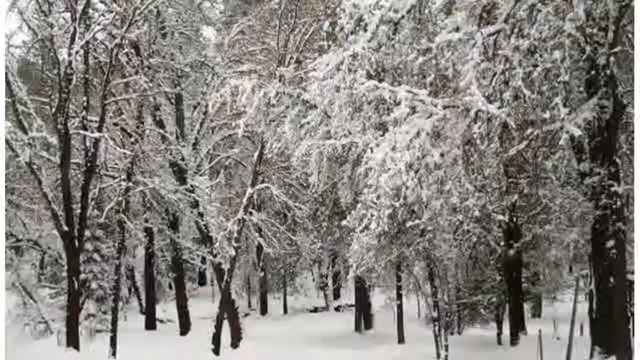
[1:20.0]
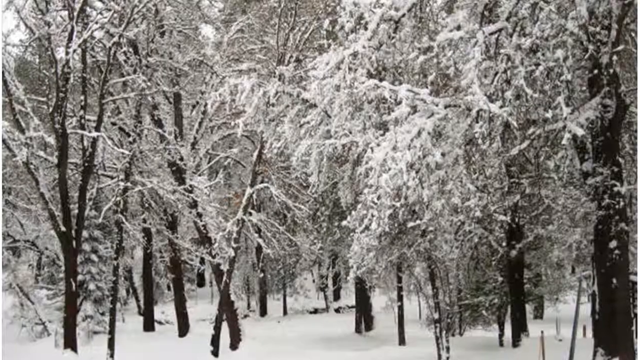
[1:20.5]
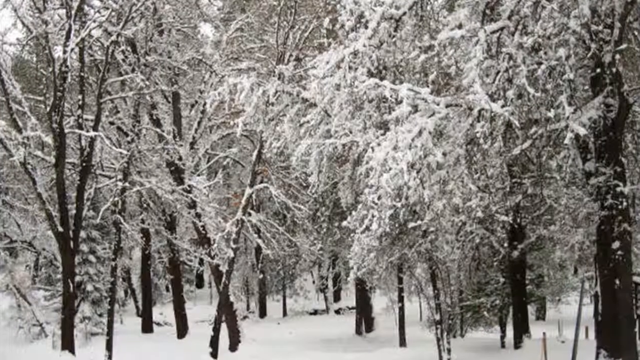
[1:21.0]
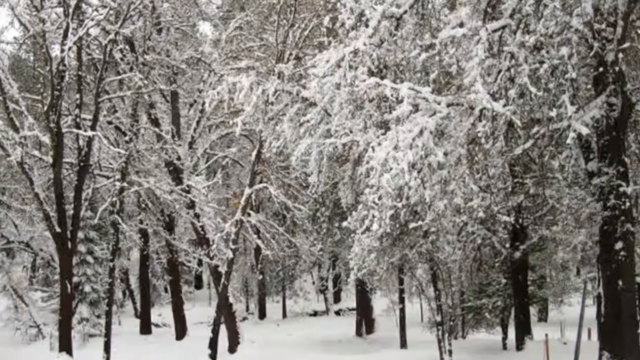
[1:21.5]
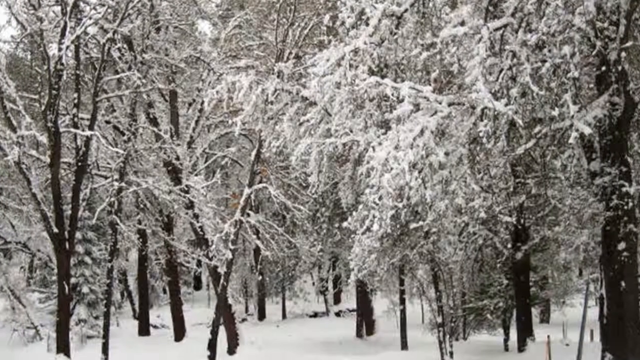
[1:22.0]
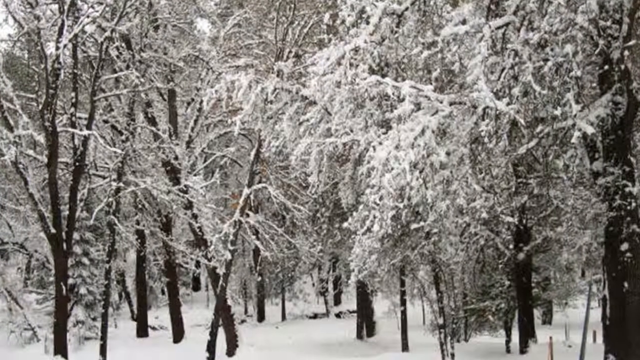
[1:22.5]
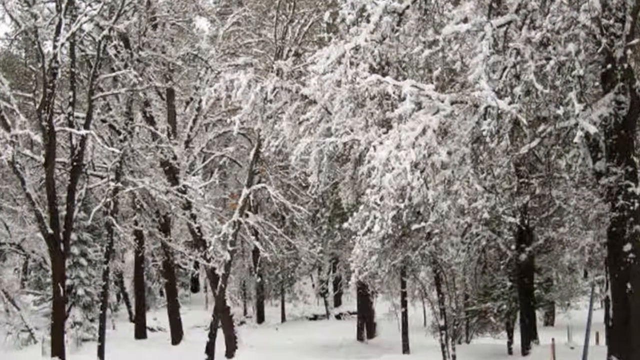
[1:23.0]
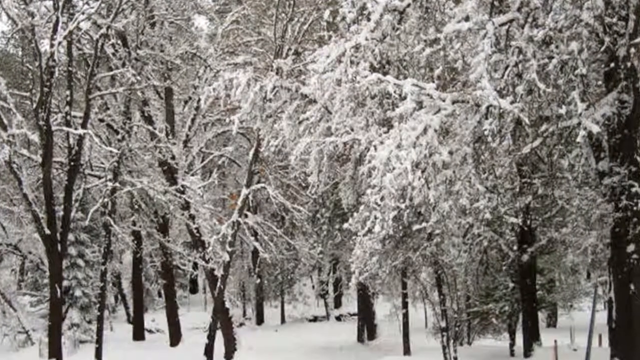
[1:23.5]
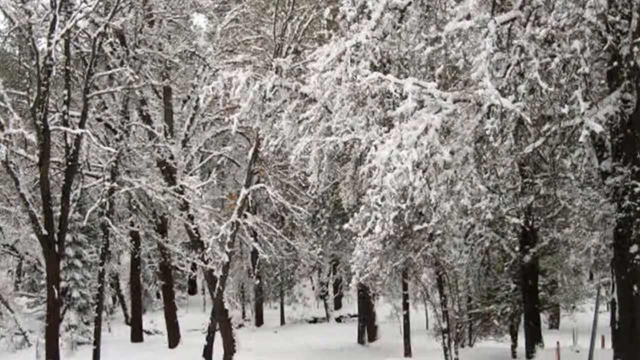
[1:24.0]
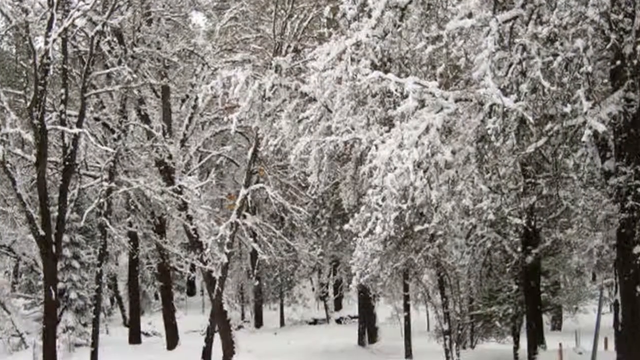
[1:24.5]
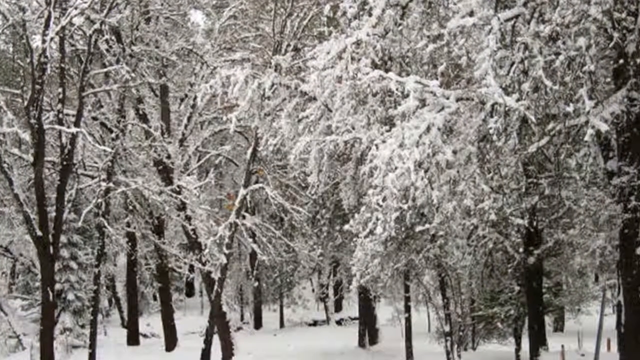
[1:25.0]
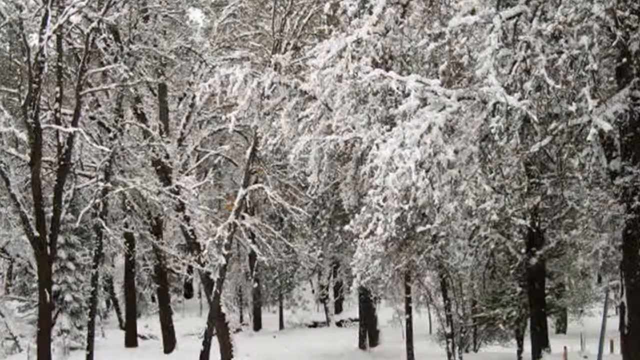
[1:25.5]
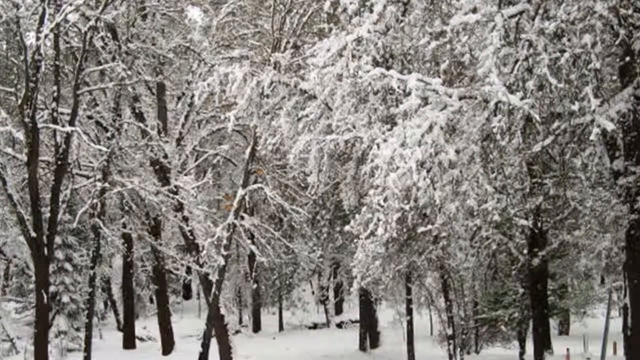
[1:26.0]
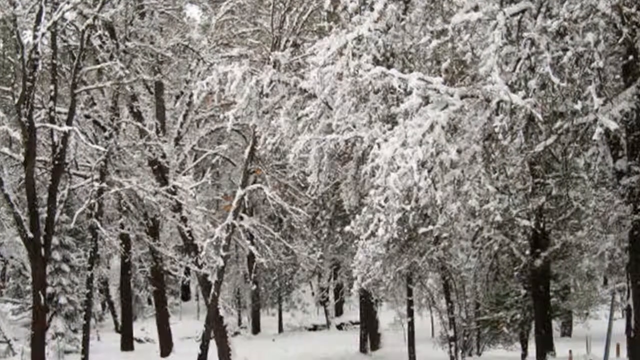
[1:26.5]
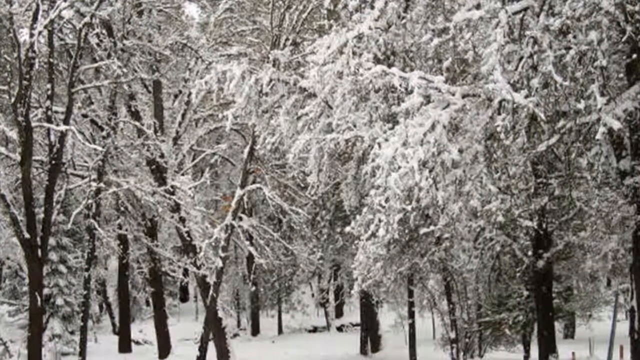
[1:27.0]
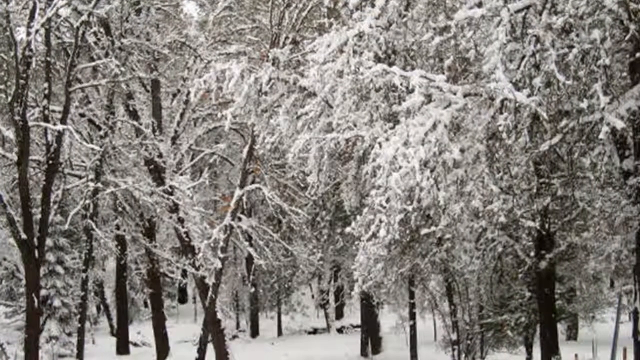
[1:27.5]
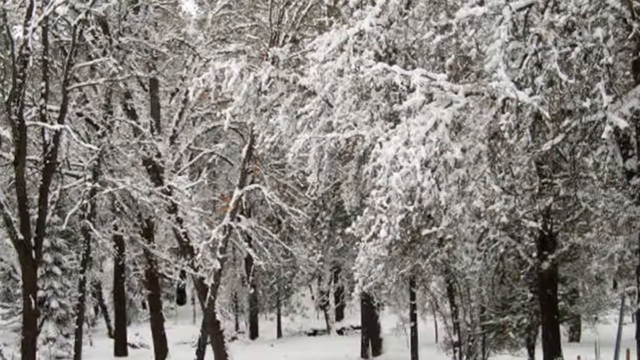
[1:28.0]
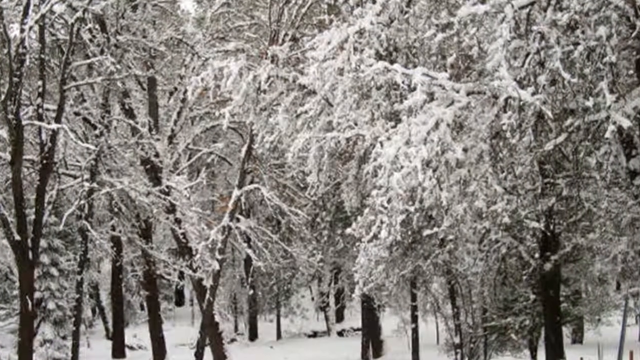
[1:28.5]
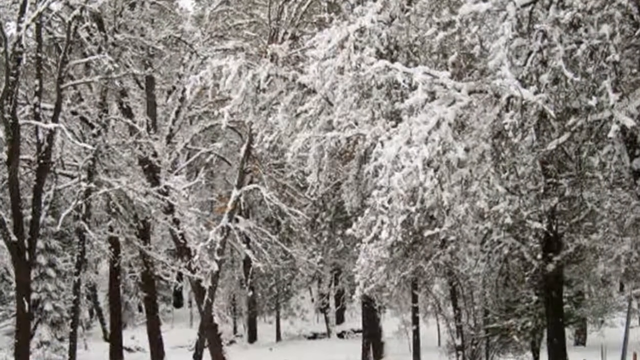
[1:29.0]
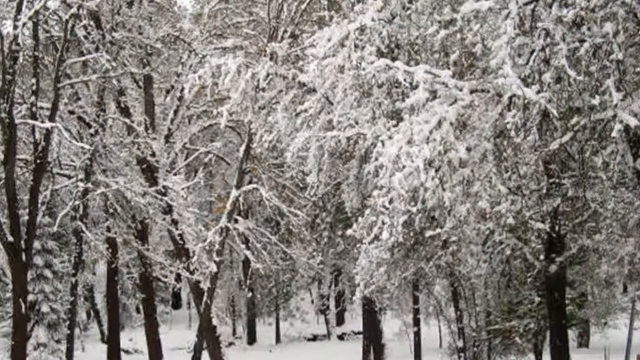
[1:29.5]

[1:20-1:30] The list of common snowflake types continues. The third type is the dendrite, appearing at temperatures between 25 and 32 degrees and between minus 7 and 15 degrees, with medium to high humidity. The next type is columns, appearing at temperatures between 15 and 25 degrees with medium humidity. The last type is needles, which appear at temperatures between 15 and 25 degrees with medium humidity.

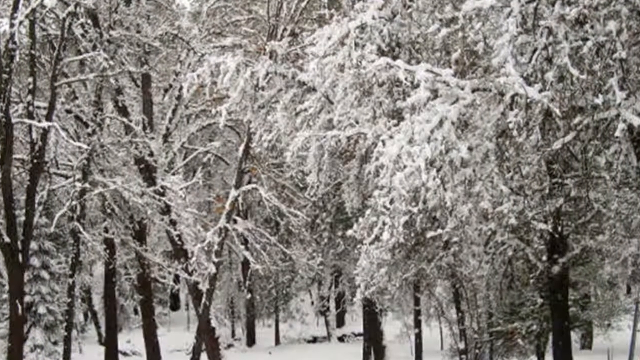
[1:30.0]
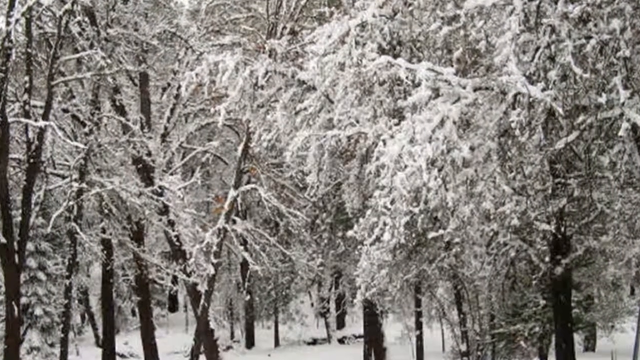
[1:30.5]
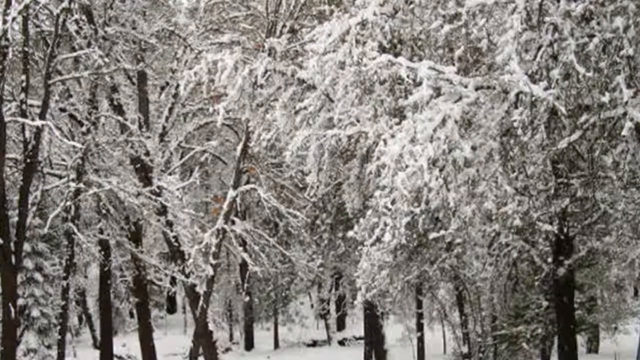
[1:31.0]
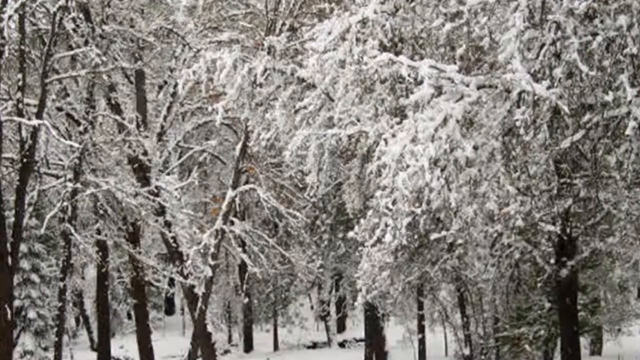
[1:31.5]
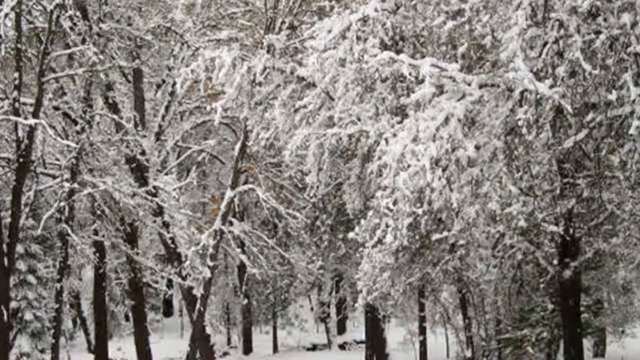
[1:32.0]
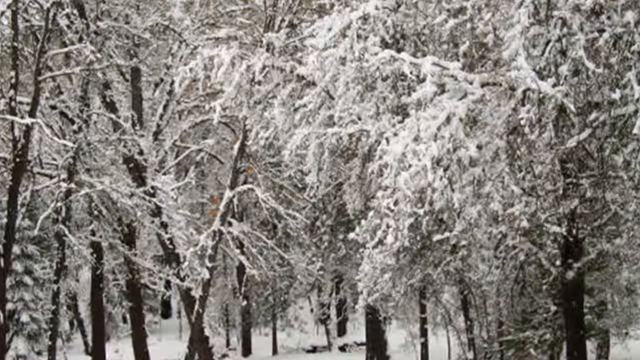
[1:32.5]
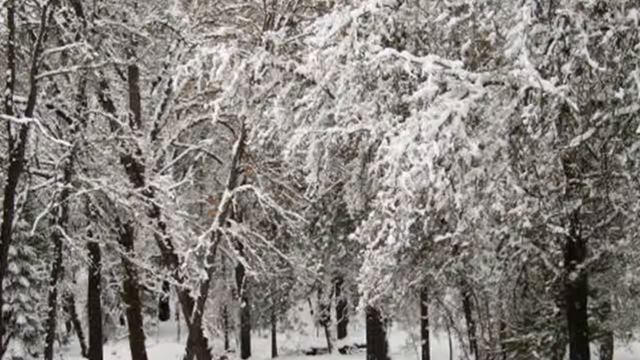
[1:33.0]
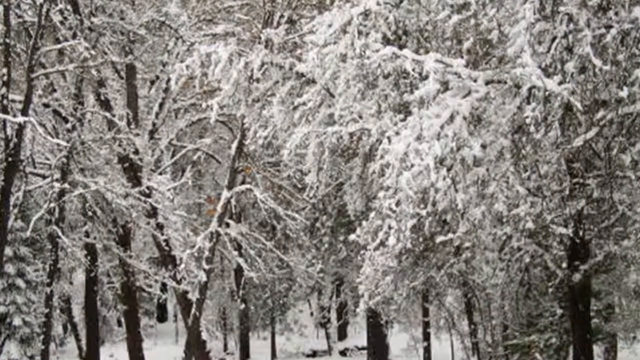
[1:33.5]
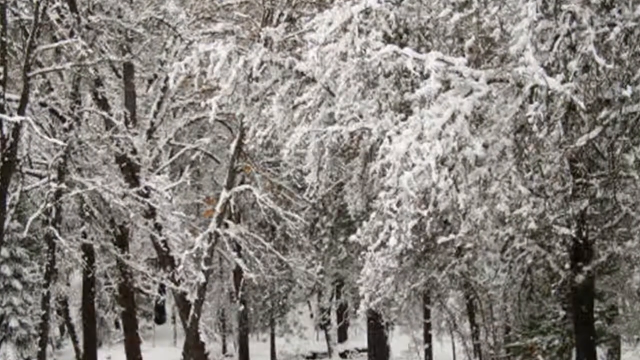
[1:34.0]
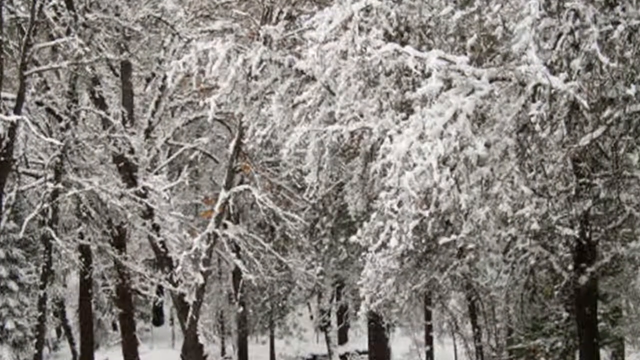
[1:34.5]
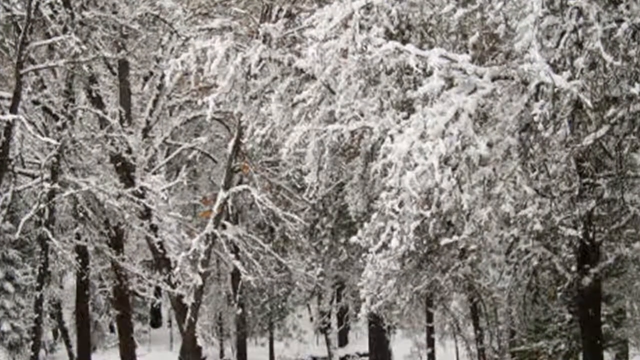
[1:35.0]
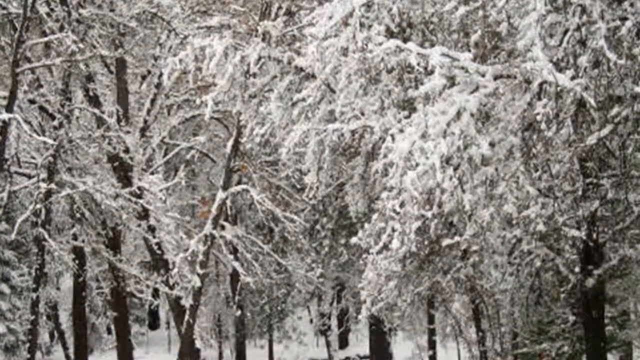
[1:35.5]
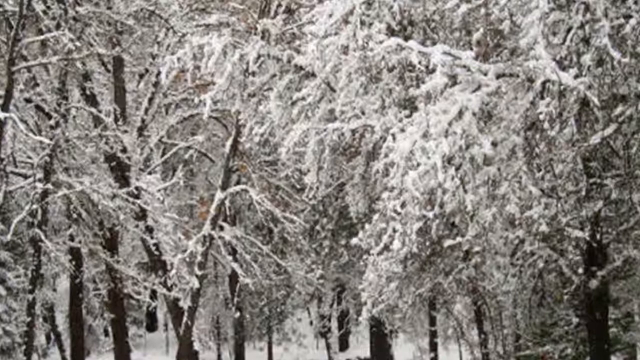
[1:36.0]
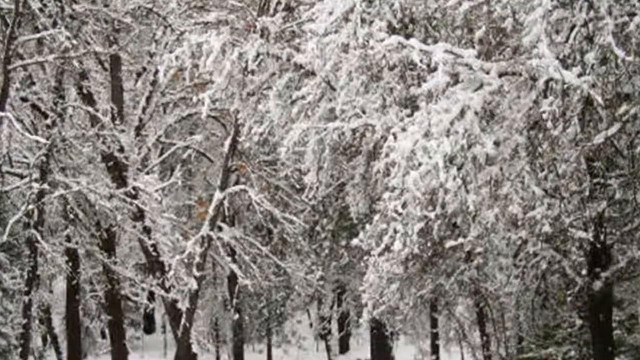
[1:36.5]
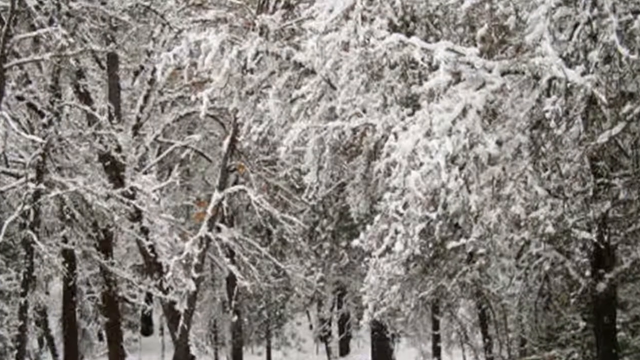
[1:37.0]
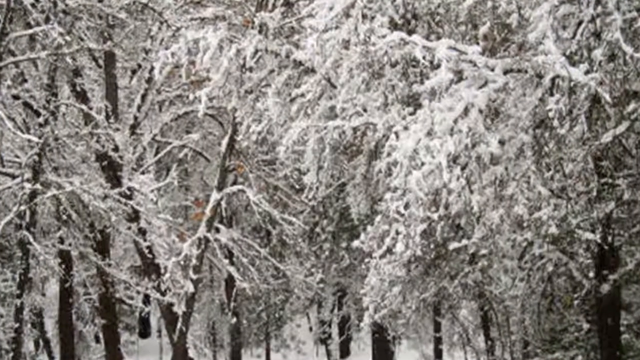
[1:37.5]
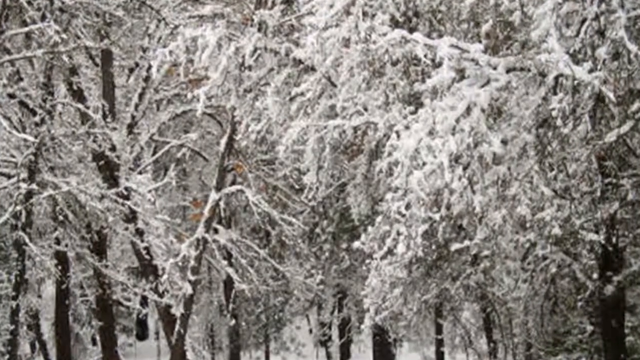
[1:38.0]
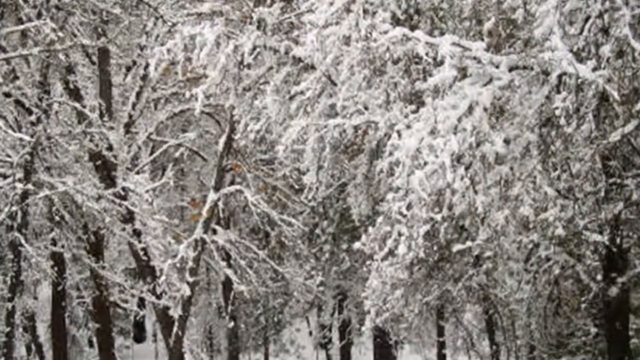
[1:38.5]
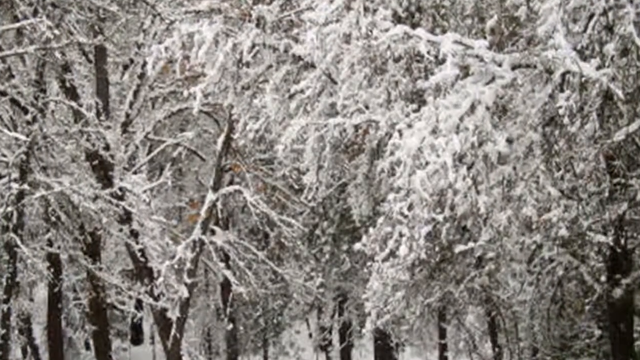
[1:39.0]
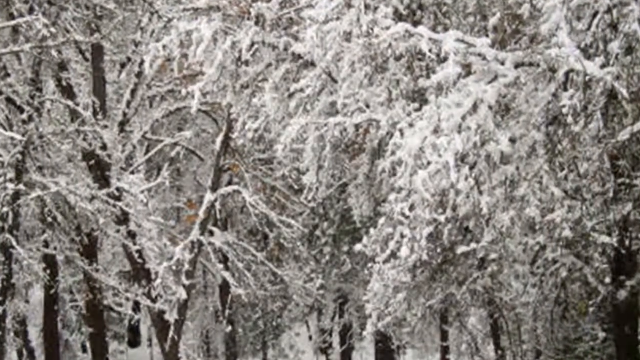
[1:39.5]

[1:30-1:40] A snowflake is shown whose pattern makes it look man-made, as if it had been made and then released into the sky to fall.